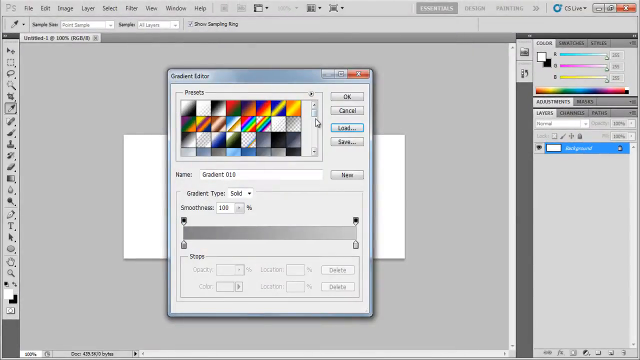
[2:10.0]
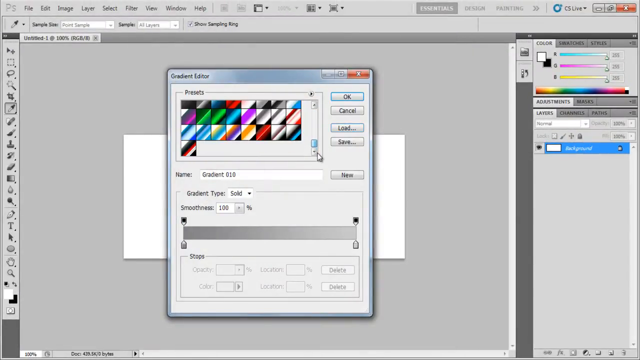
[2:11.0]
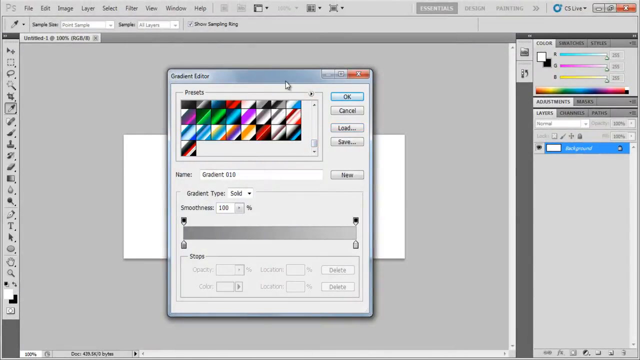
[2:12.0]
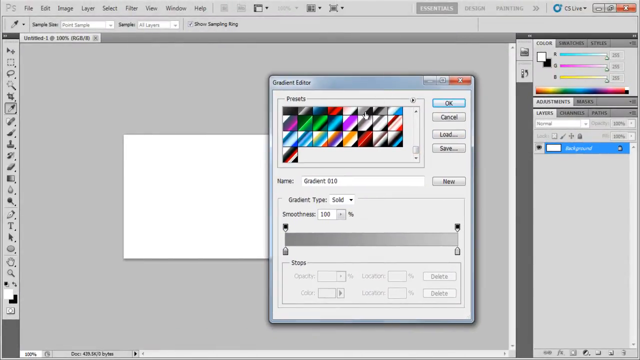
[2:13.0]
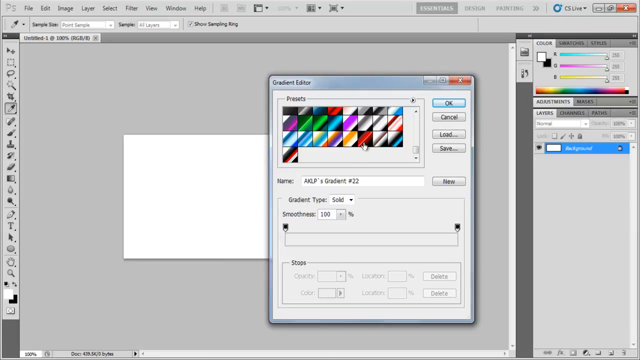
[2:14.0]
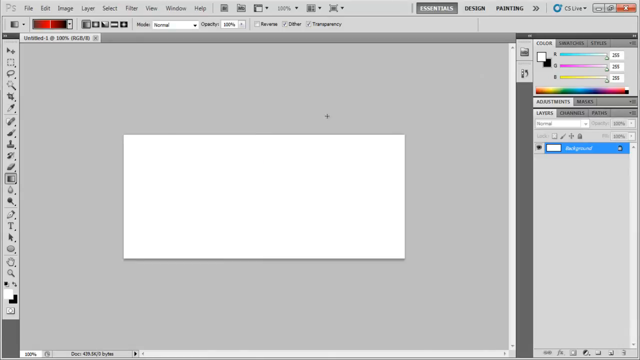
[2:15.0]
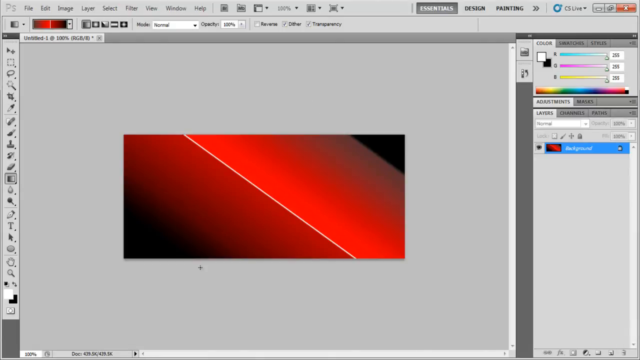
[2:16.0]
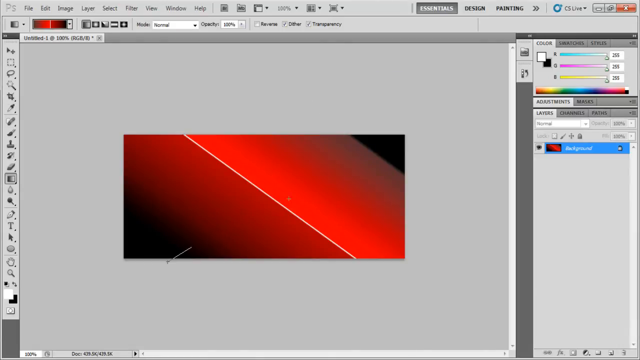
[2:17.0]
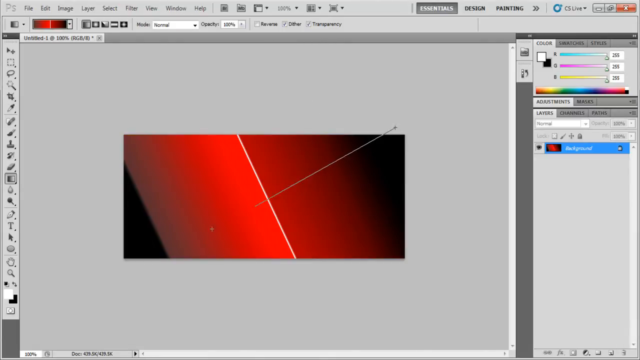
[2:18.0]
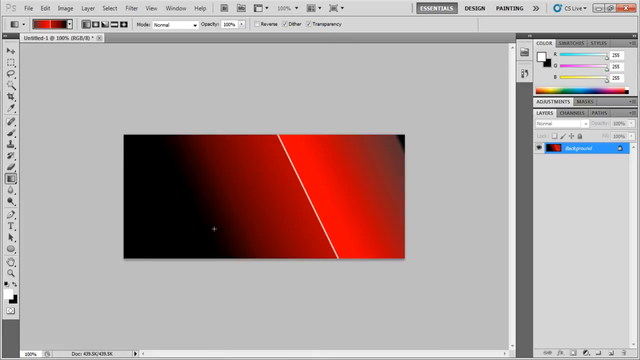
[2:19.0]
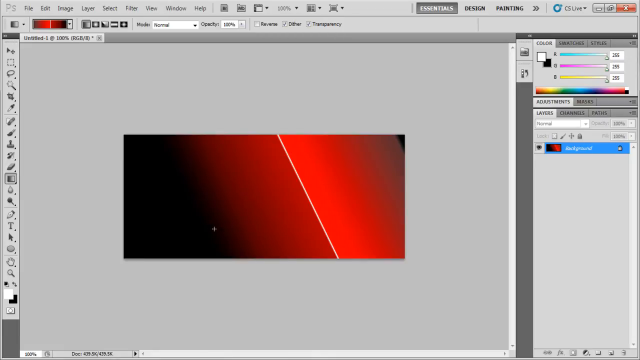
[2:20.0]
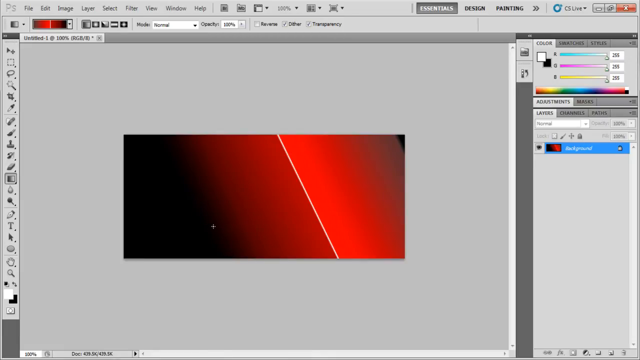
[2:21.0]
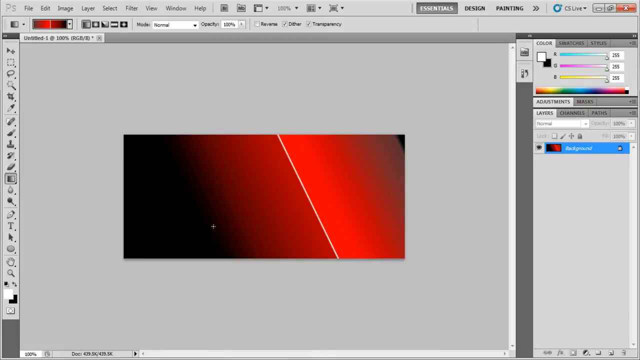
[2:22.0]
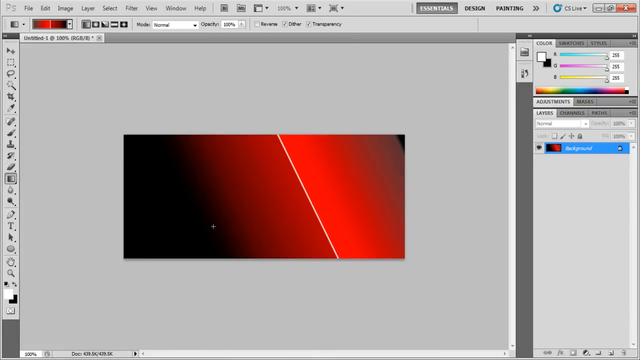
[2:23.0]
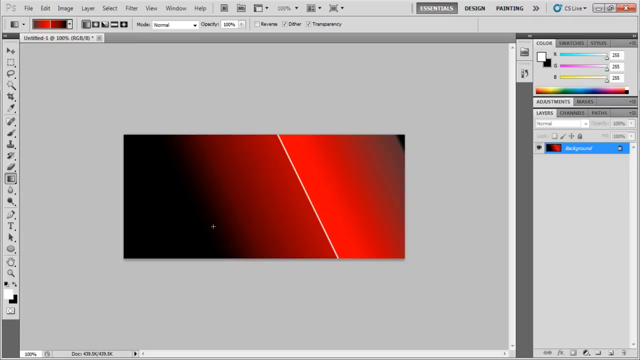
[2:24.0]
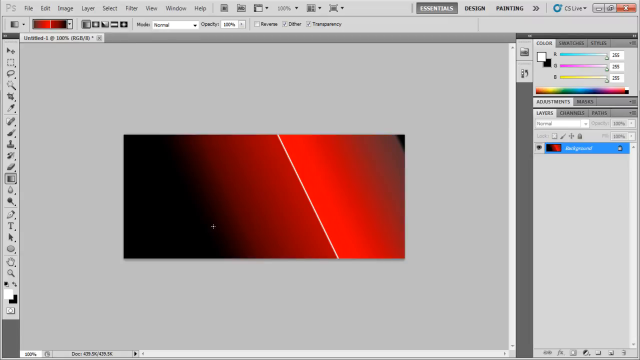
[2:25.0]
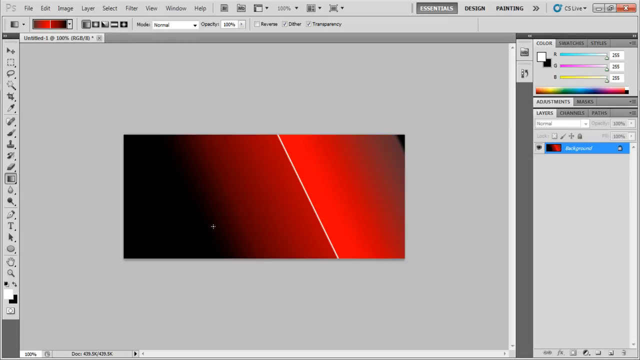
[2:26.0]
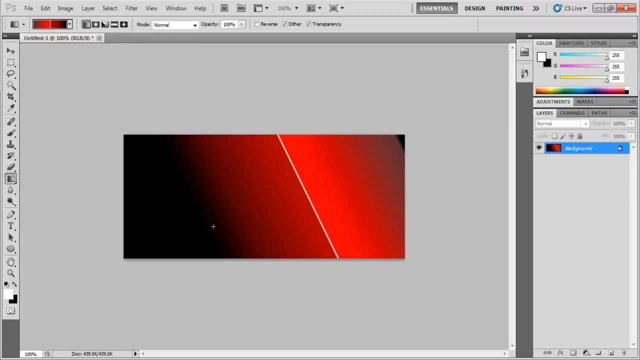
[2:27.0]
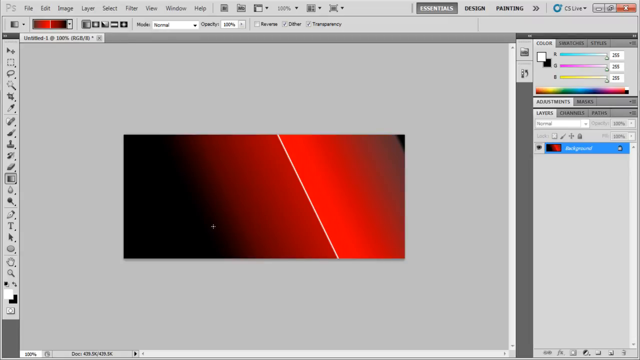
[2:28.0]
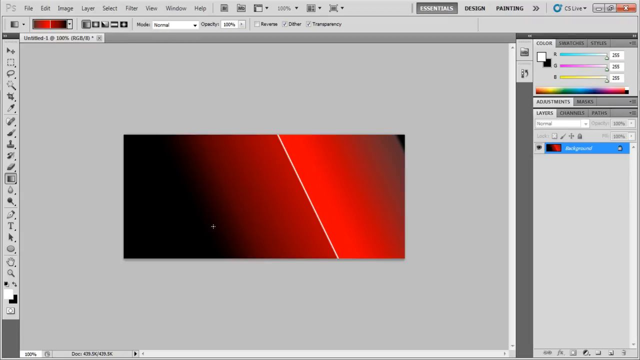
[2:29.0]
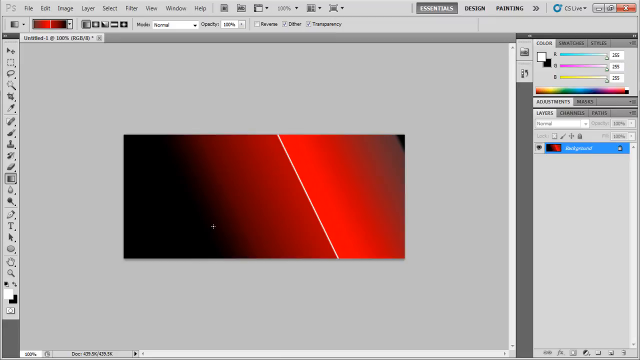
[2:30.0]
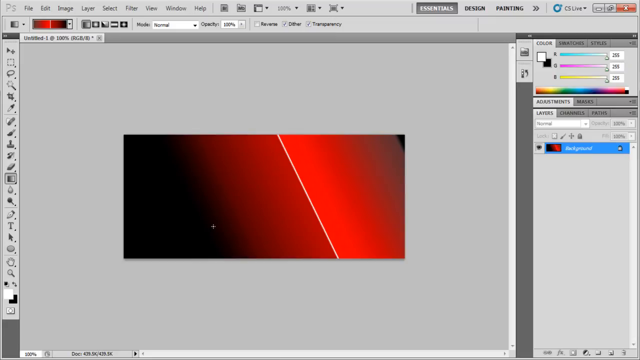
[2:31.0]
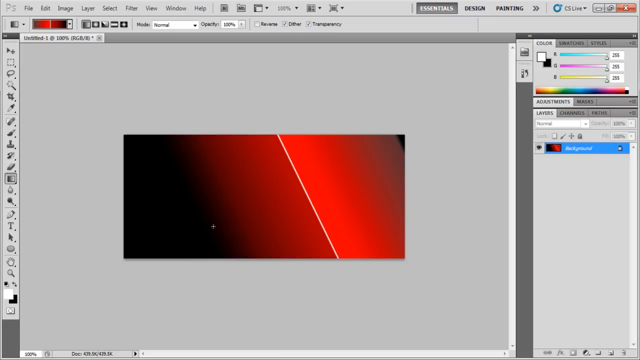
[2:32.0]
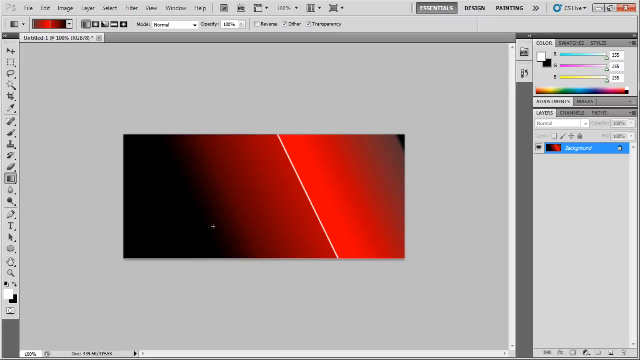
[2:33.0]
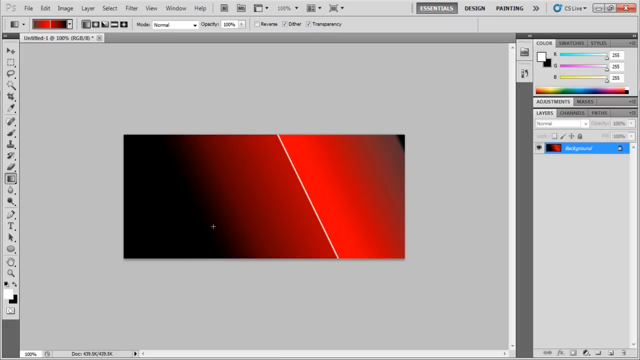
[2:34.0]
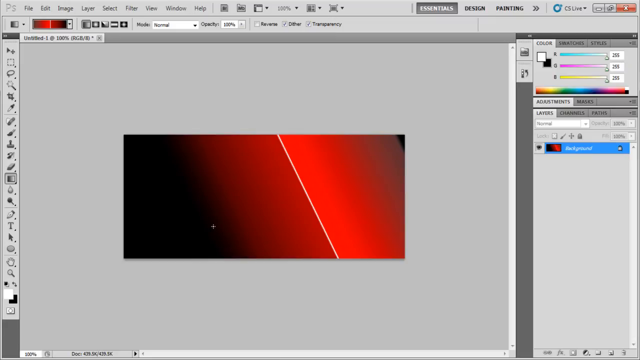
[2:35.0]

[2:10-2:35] The Adobe Photoshop window is open in full screen mode. No content has been rendered on the screen, and it still has a white background. A Gradient Editor window is open and has been scrolled to select a specific gradient. Eventually a red shadow gradient with dark red, light red and dark areas is loaded and rotated across the white rendering space. Nothing else appears besides a mouse cursor, which adjusts the rendered gradient by rotating it and moving it within the rendering space from left to right, so that there is more darkness and the red color mostly appears to one side, gradually going from dark to light.